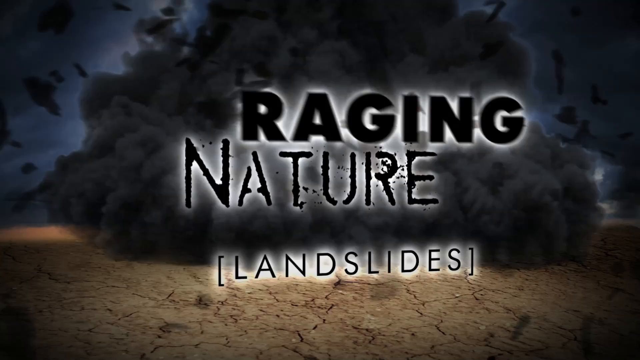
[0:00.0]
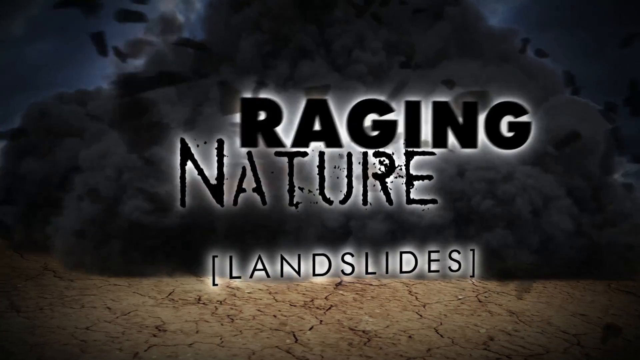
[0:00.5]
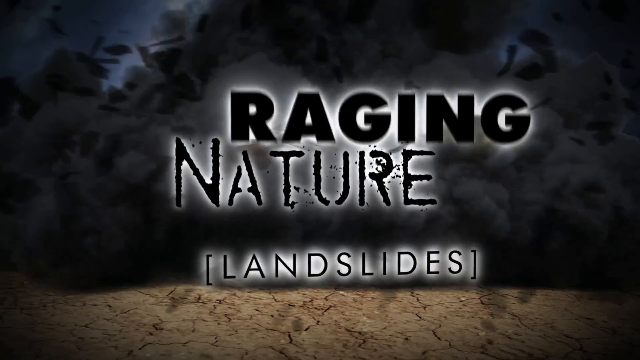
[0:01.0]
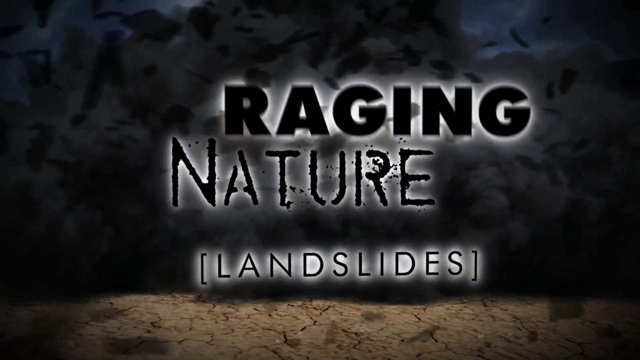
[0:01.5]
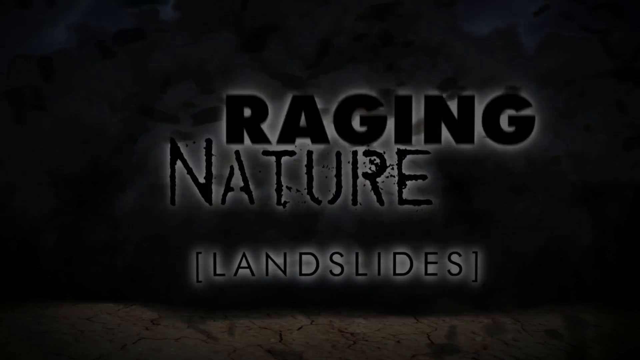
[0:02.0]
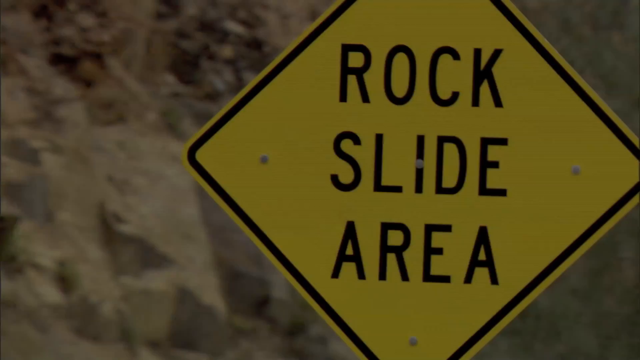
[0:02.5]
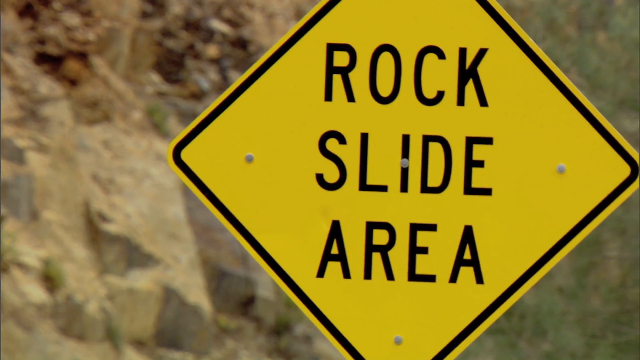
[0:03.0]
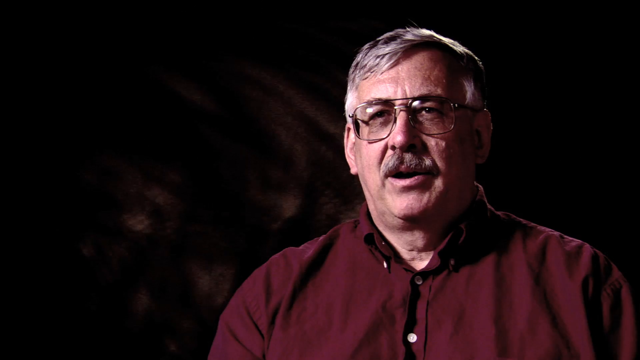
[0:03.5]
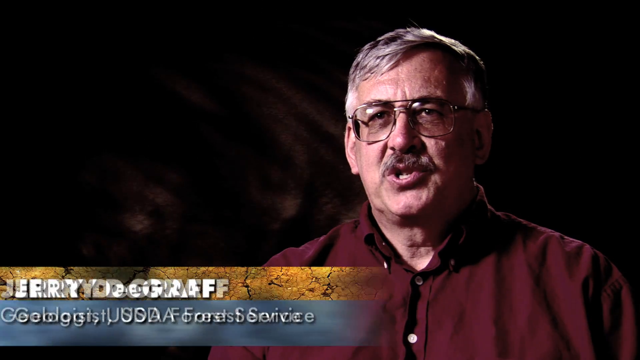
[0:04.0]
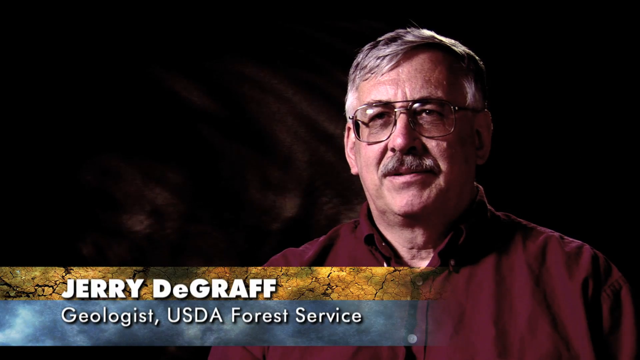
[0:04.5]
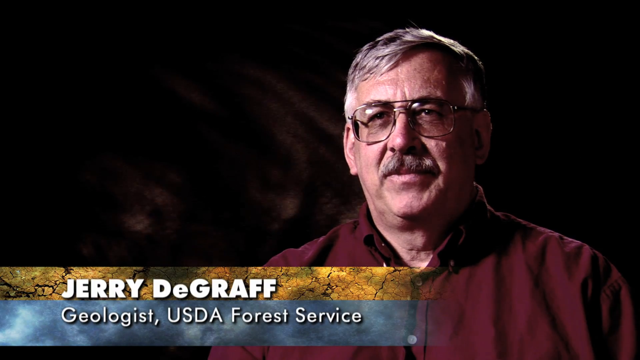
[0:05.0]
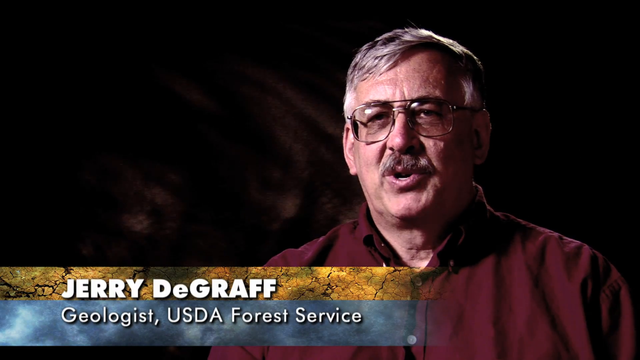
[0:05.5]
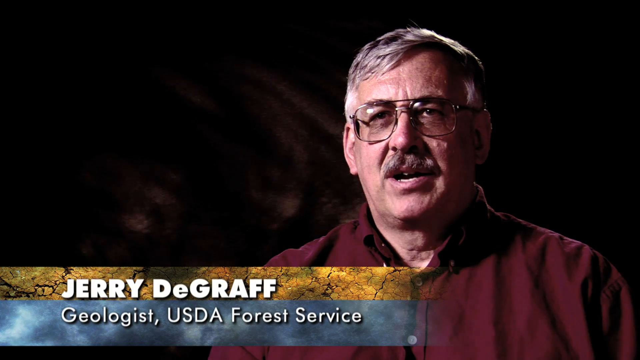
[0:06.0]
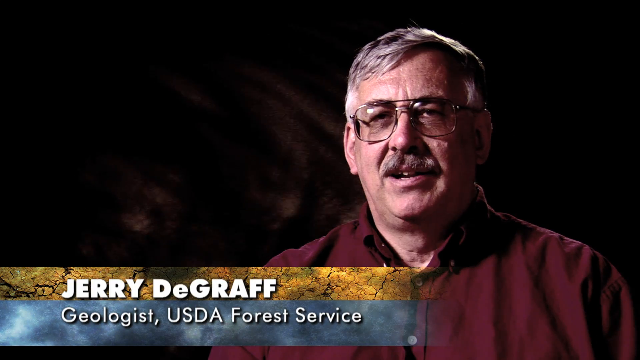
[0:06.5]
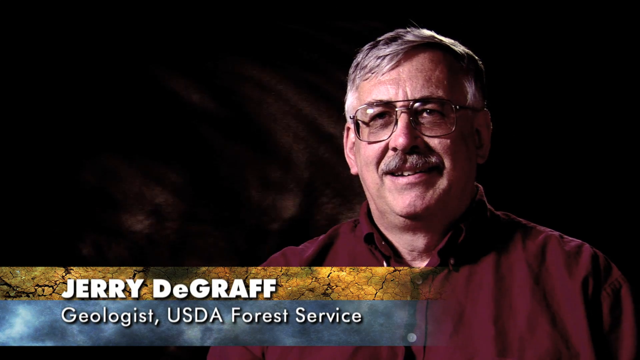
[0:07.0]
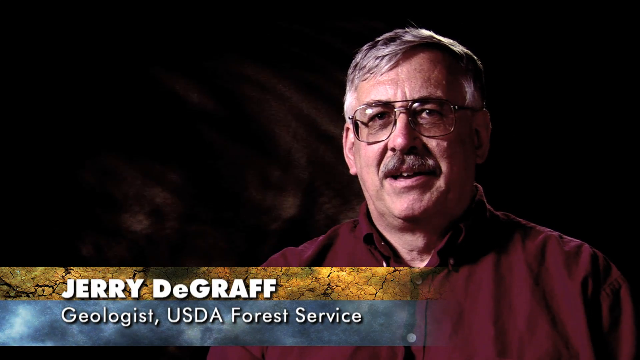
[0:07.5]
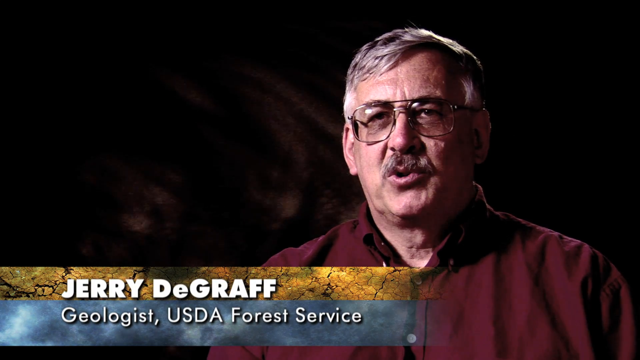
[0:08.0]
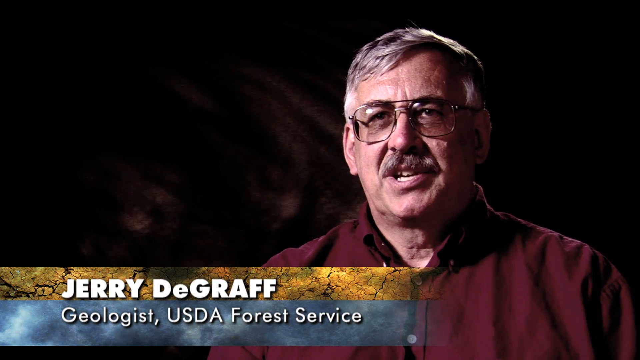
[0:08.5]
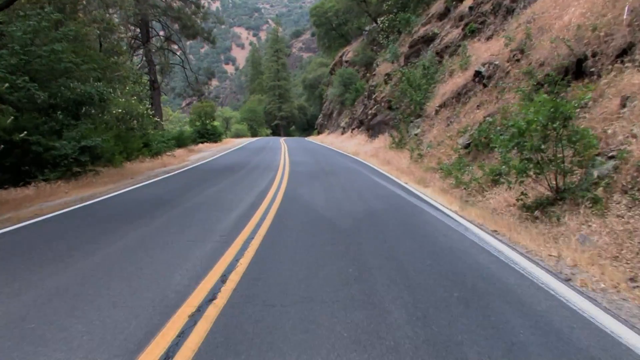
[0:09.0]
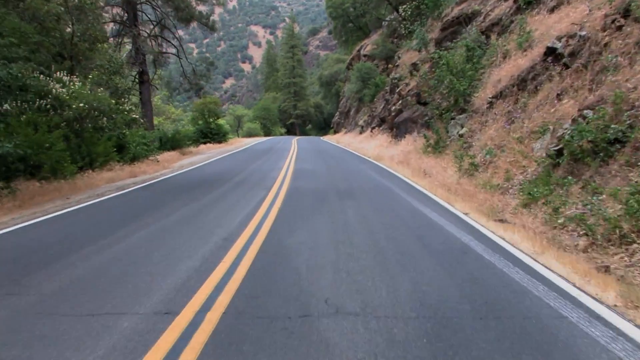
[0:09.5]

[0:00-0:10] The video opens with what might be a tornado blowing. Title text reads "Raging Nature Landslides": "Raging" is in bold black text, "Nature" is in a broken, thinner black text below it, and the word "landslides" is in parentheses in all-capital black text. Wind blows over a rocky area. The next scene shows a bright yellow sign outlined in black that reads "Rock slide area" against a rocky background. Next, a gentleman named Jerry DeGraff, as written in a banner in the lower left corner, smiles as he speaks directly toward the camera. A quick view of a road follows, as if from a car traveling along a rocky mountain highway, with rocks to the right, trees to the left, and a very green, forest-like atmosphere in daytime.